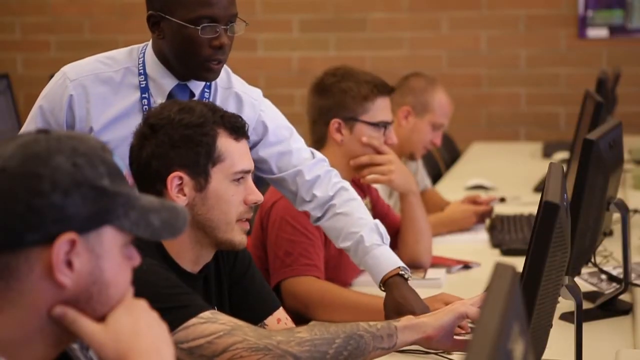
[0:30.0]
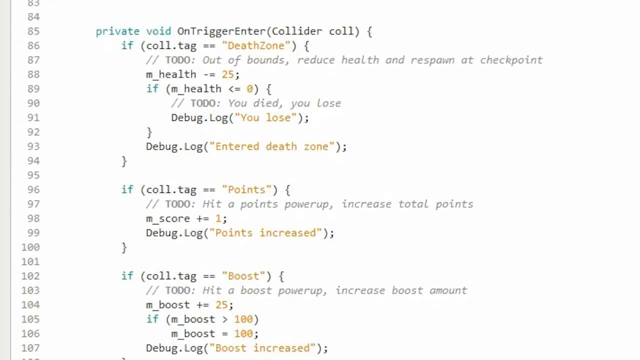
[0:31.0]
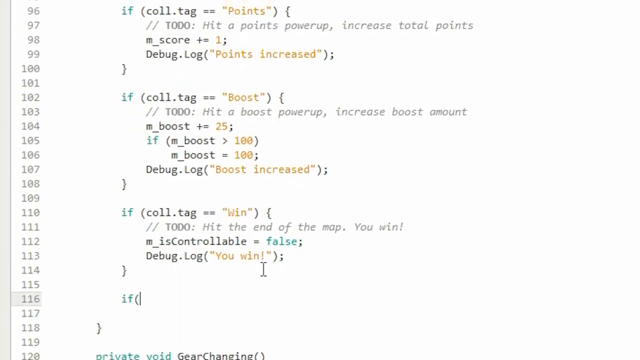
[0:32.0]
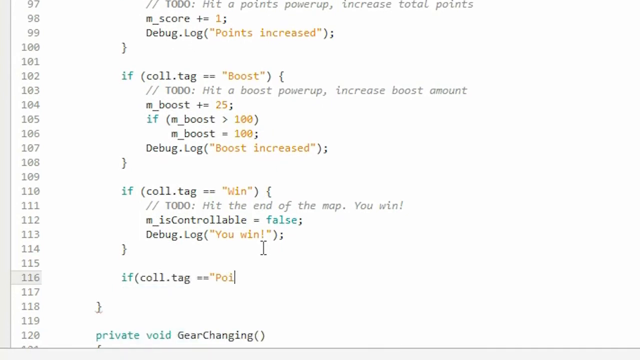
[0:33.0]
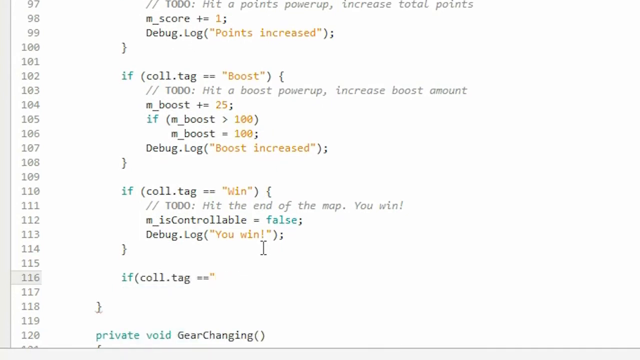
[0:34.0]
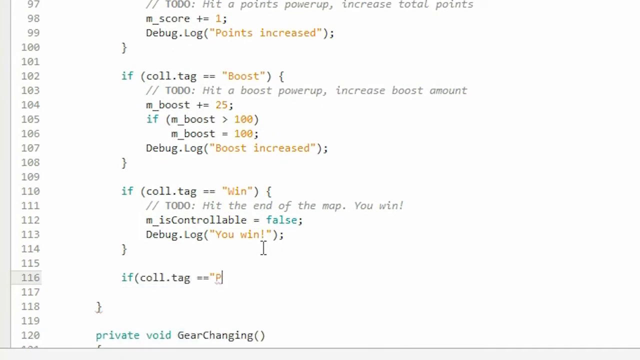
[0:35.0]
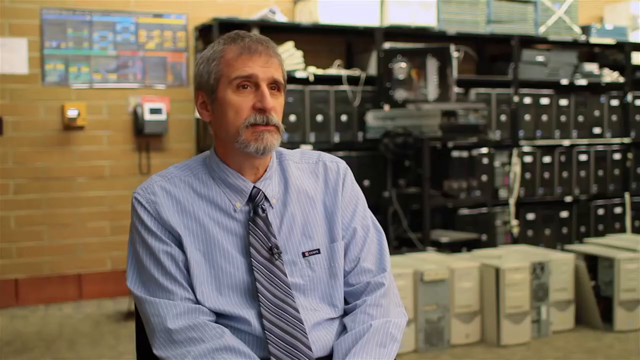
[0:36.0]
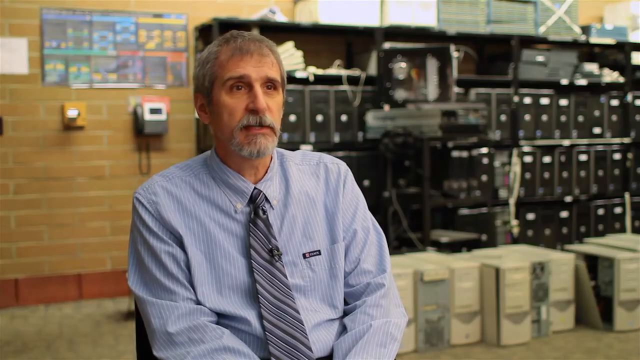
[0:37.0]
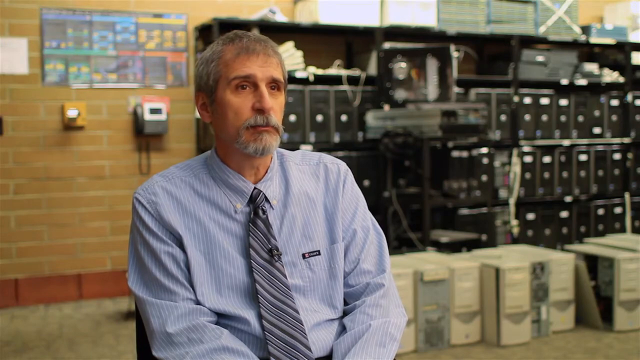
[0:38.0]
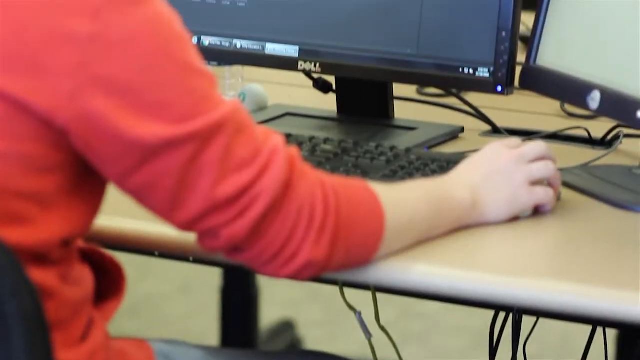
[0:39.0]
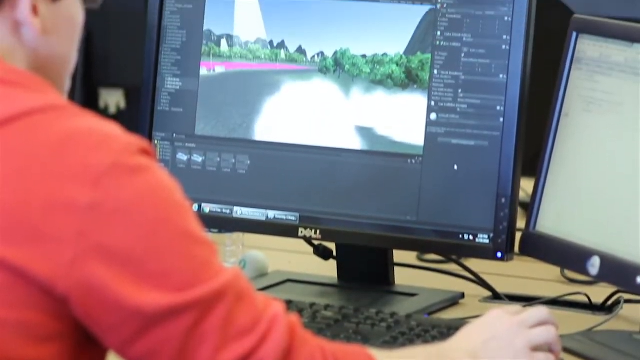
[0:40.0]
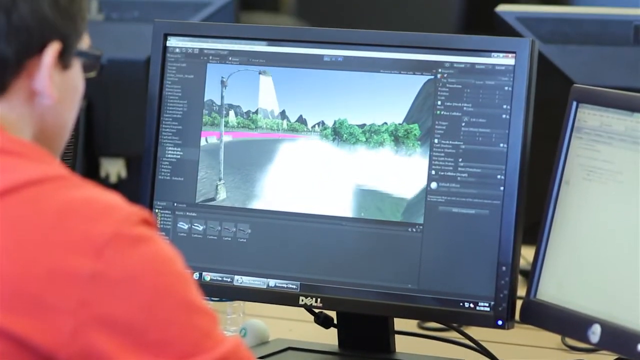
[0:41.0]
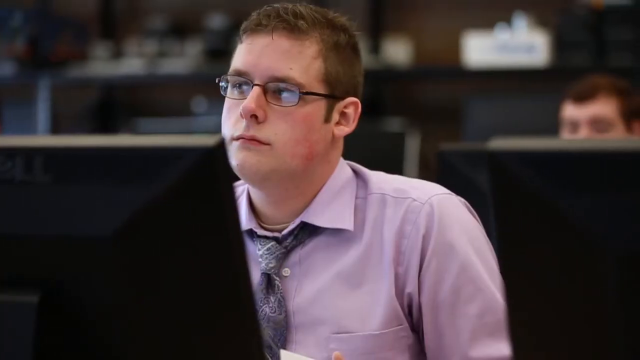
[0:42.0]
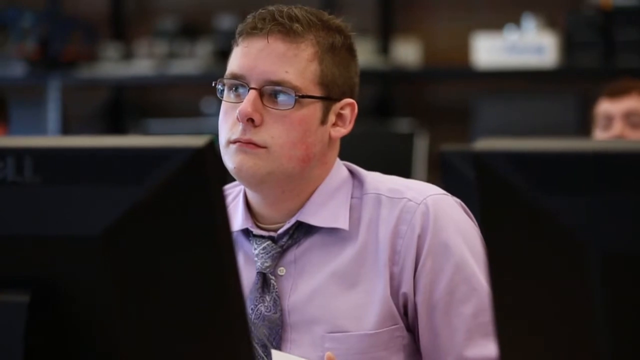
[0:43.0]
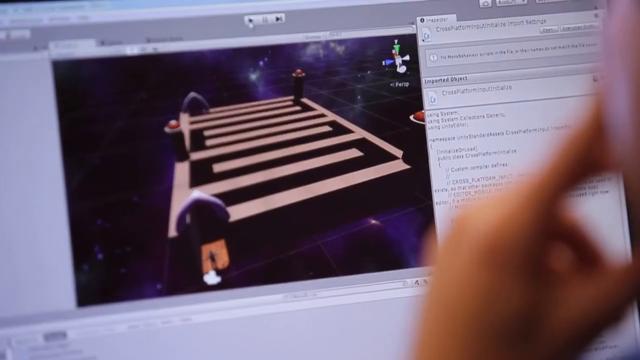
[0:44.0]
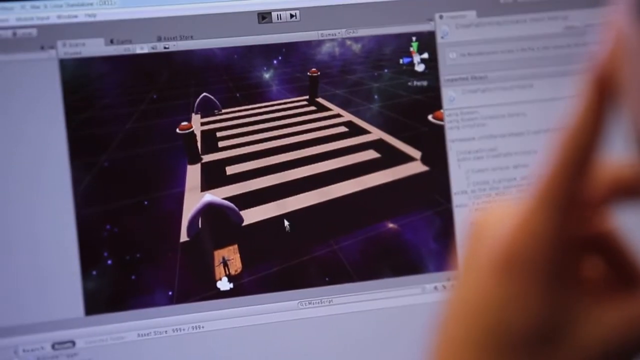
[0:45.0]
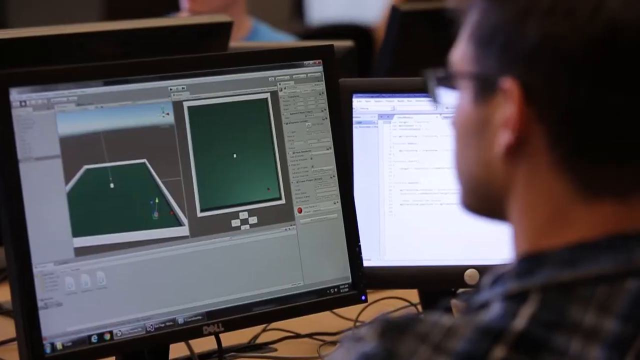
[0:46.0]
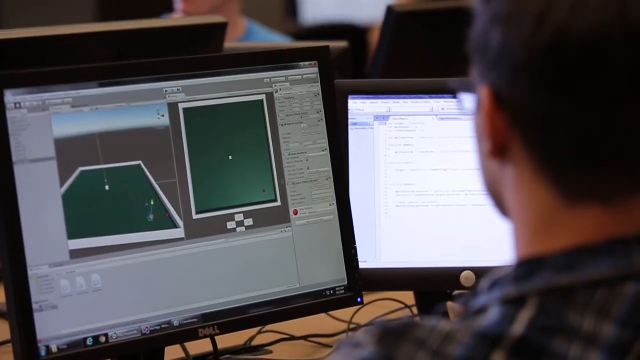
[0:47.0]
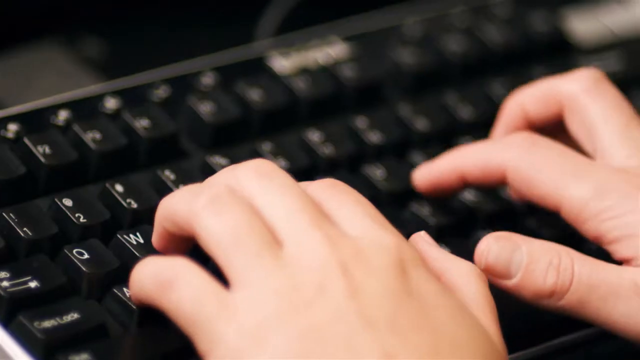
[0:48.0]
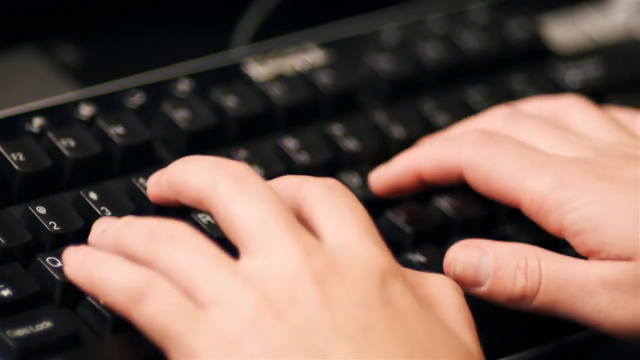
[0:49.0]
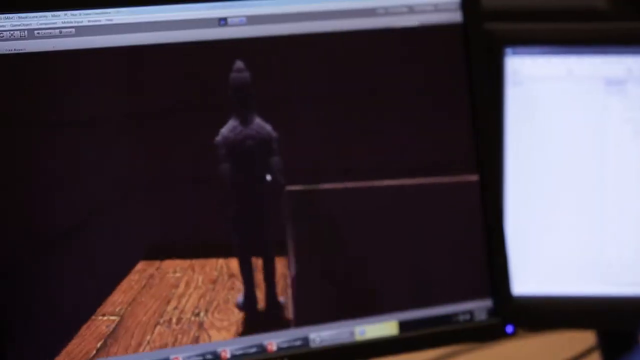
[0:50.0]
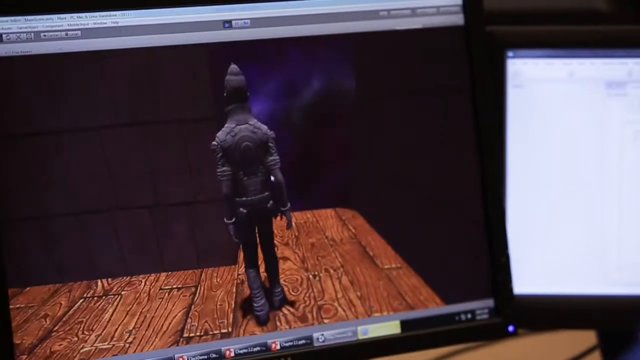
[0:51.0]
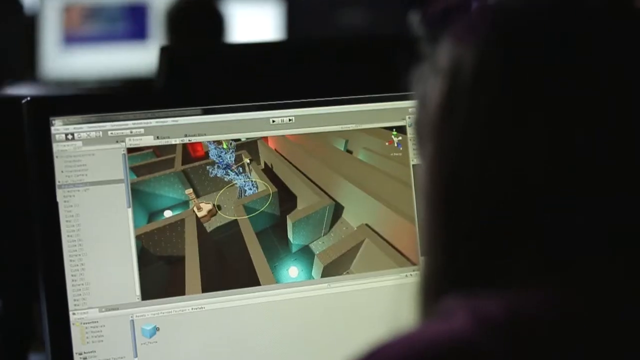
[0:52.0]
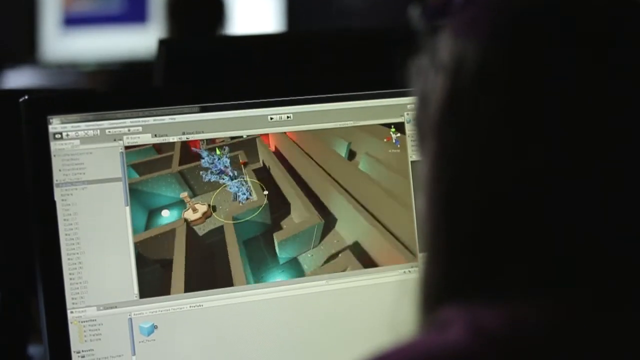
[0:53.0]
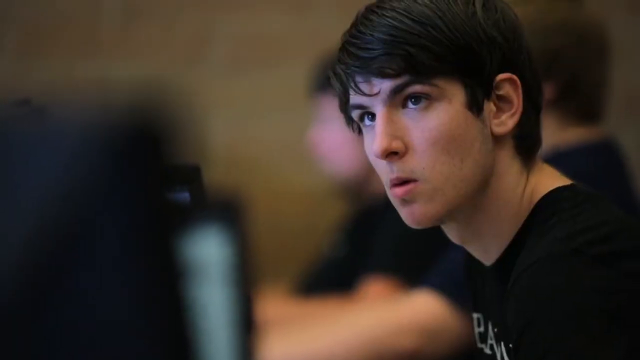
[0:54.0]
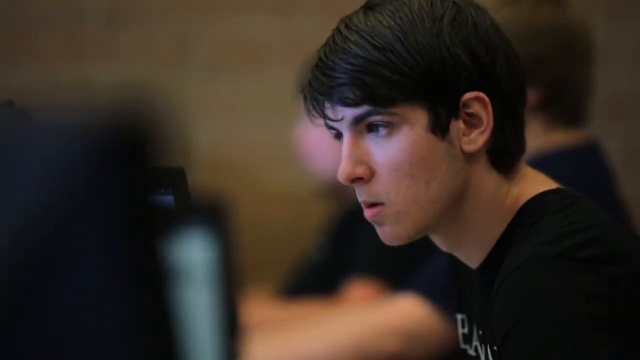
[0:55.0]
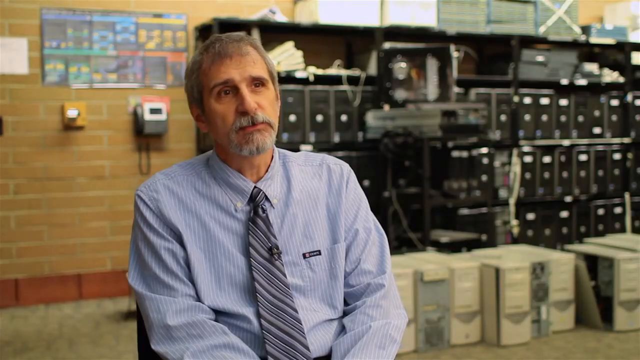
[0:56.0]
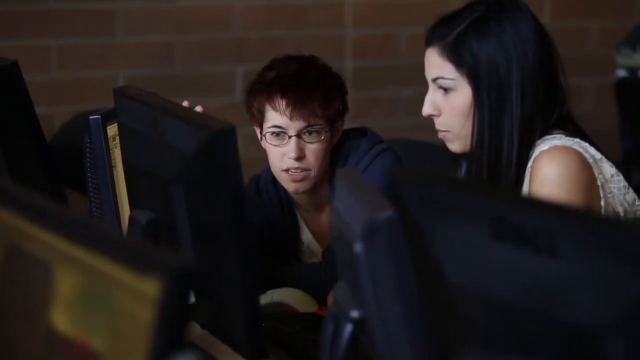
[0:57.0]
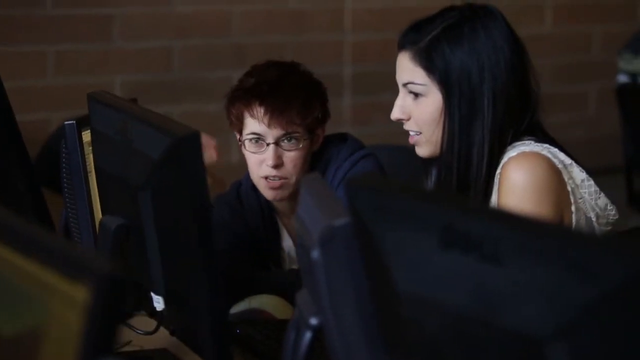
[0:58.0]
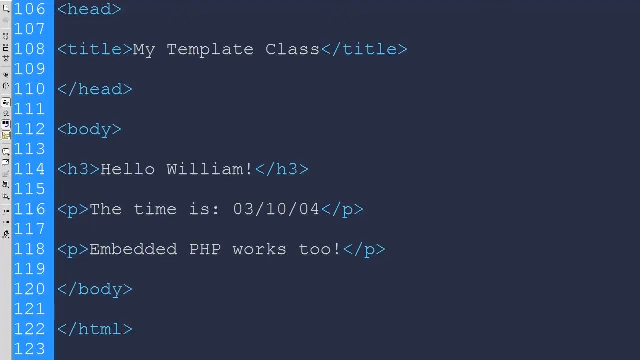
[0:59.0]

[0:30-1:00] Against a white background, a computer types out computer language. The video switches back to Roger, who is talking, then to a student's computer screen and the student sitting at the computer, apparently making some kind of video game. A front view shows a student in front of a computer but looking toward the front of the room, facing the camera; he has glasses, a pink button-down shirt and a gray tie with a pattern on it. Several computer screens follow that look like they are creating video games, along with close-ups of hands typing on a computer pad and close-ups of different graphics and games the students seem to be making. A side view shows a student in action. The video returns to Roger talking, then shows two students helping each other, followed by more scrolling computer language and what looks like many different students in different situations studying computer programming at the technical college.